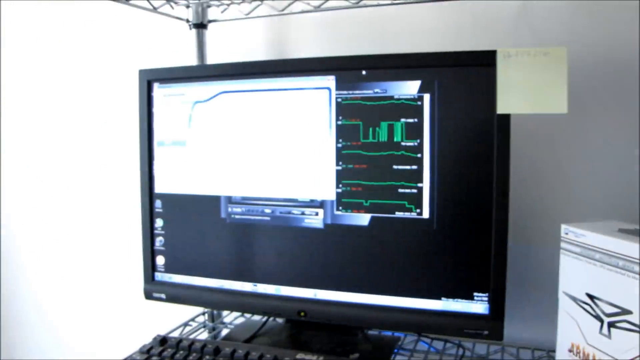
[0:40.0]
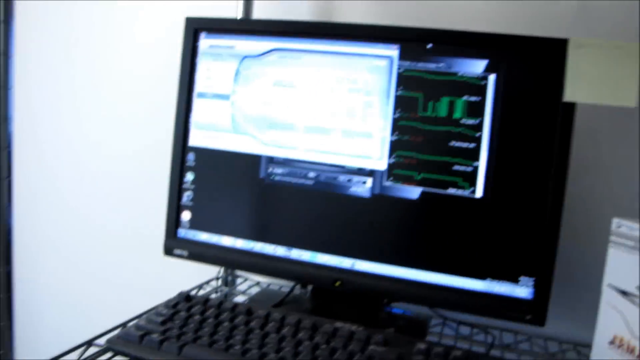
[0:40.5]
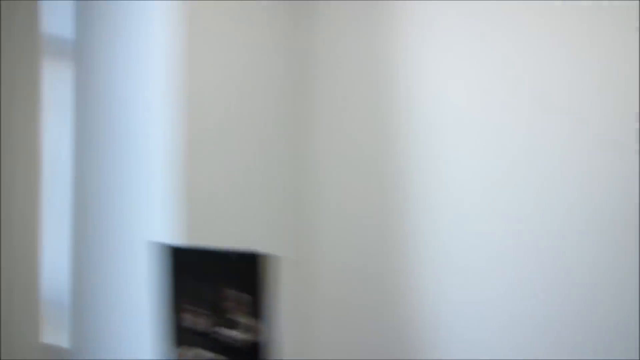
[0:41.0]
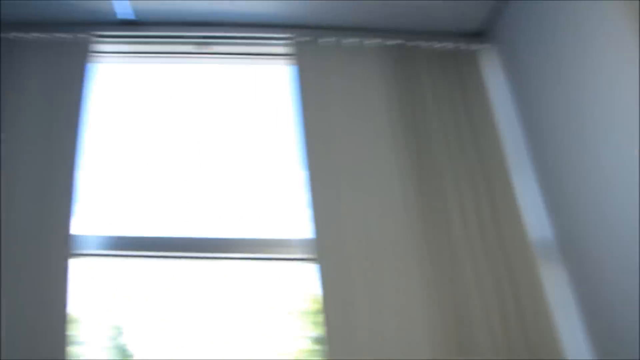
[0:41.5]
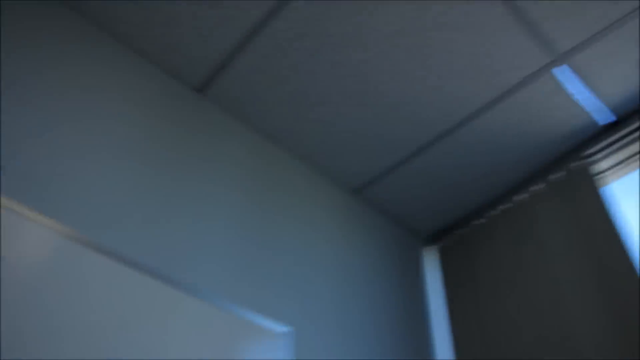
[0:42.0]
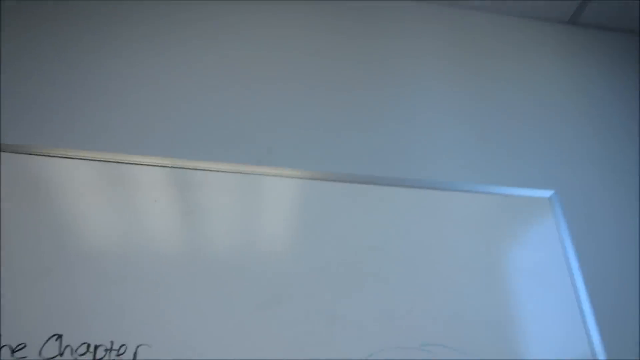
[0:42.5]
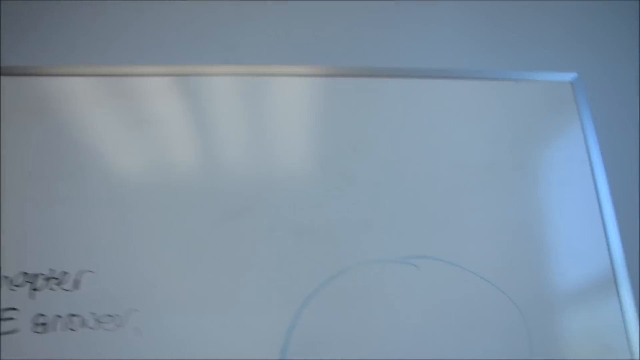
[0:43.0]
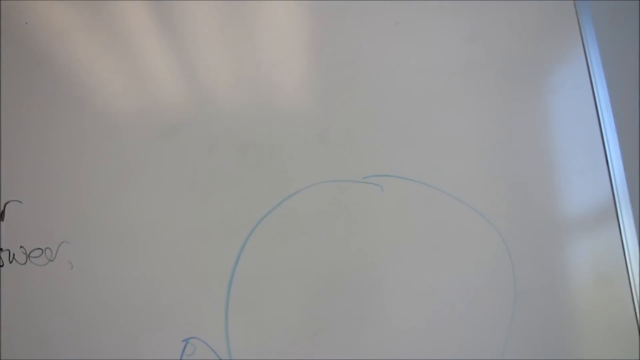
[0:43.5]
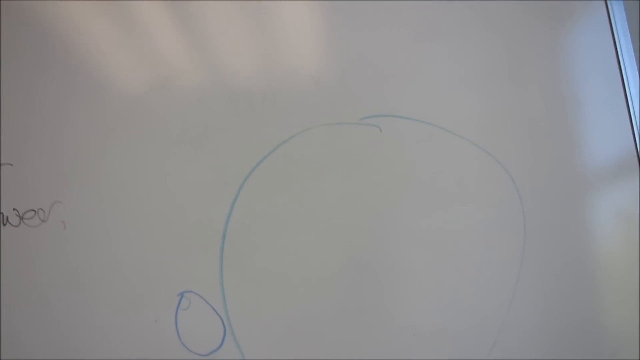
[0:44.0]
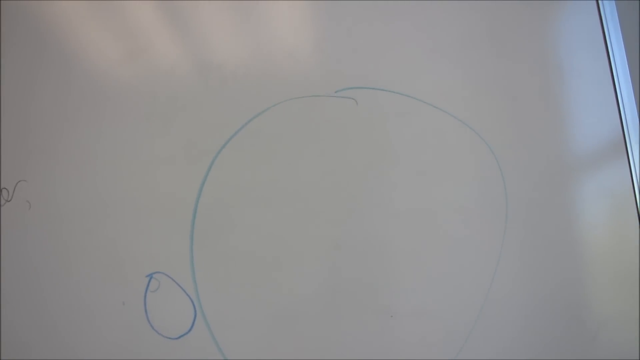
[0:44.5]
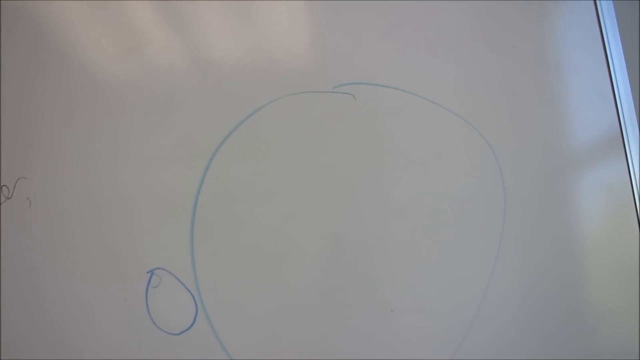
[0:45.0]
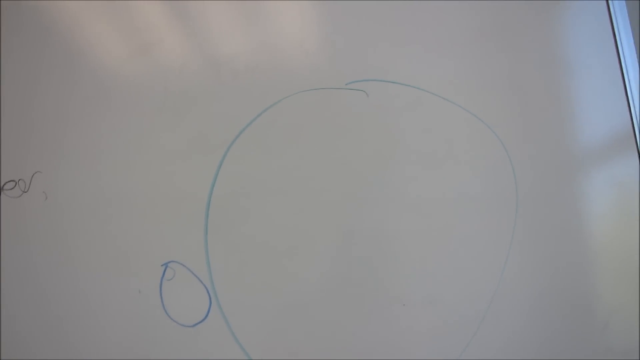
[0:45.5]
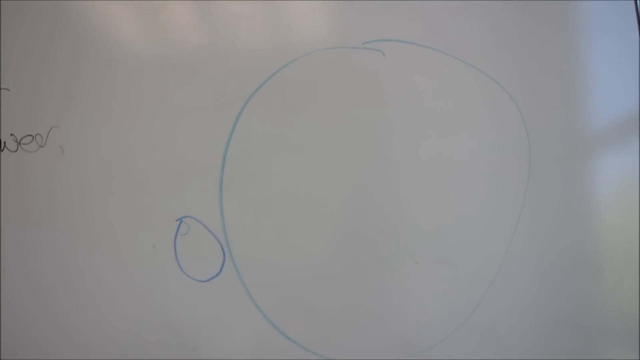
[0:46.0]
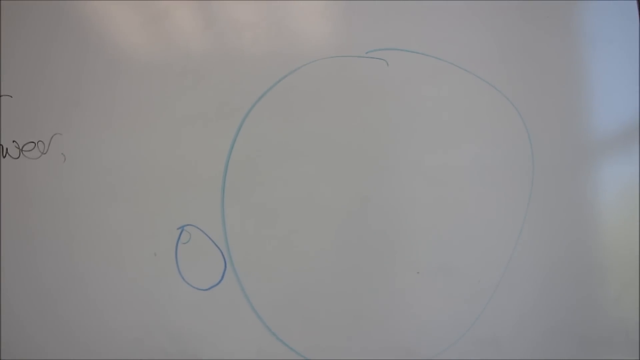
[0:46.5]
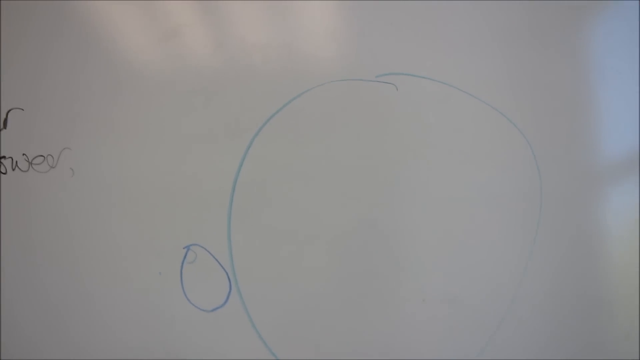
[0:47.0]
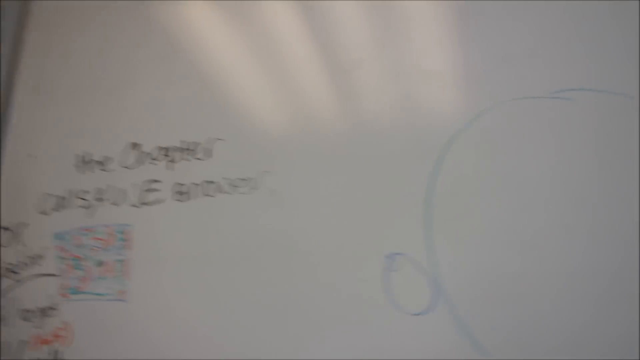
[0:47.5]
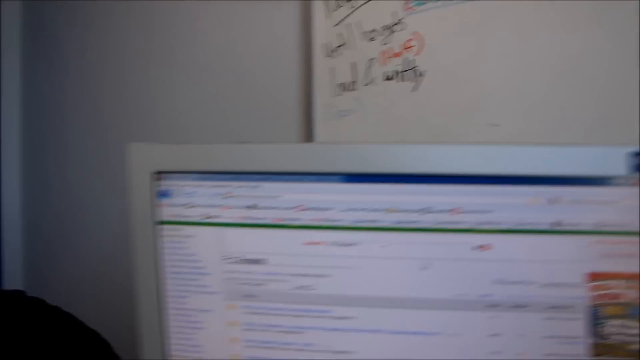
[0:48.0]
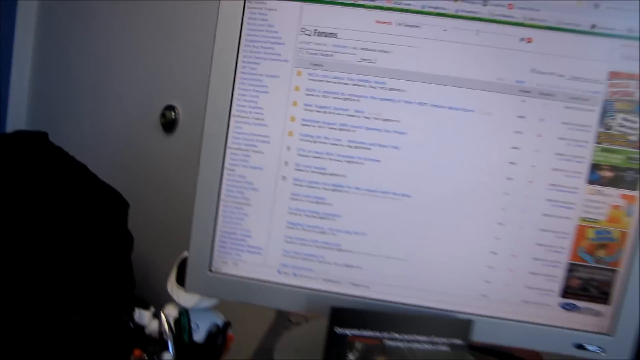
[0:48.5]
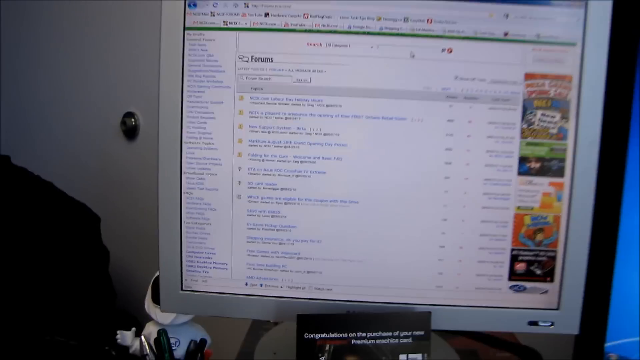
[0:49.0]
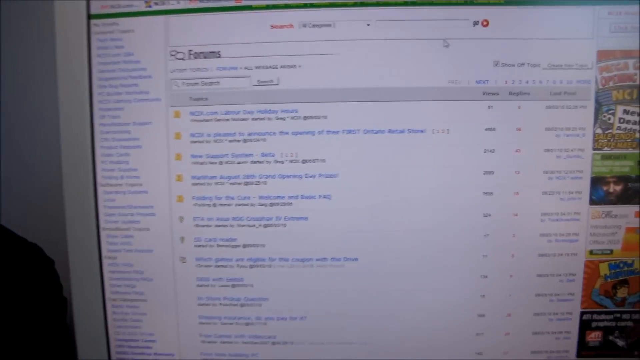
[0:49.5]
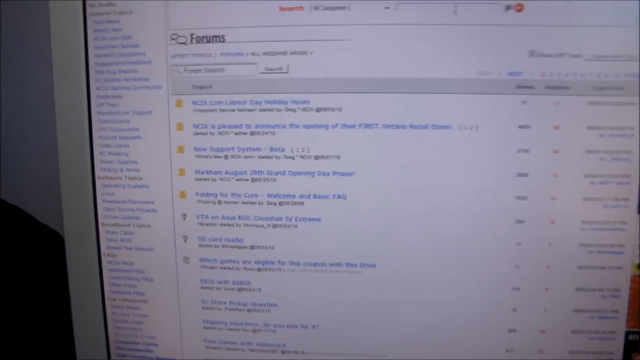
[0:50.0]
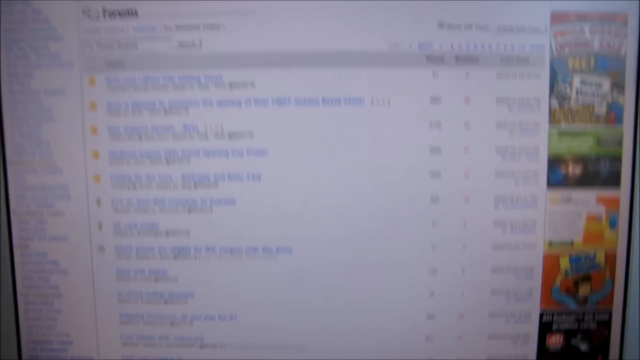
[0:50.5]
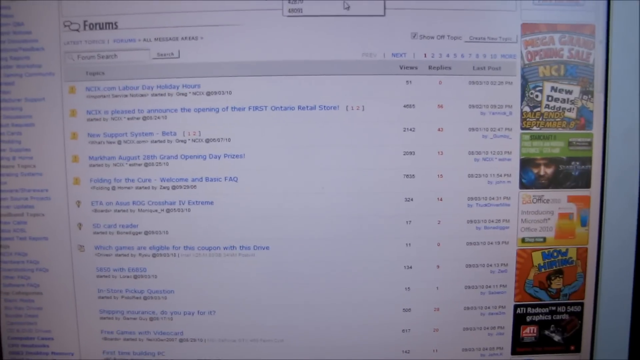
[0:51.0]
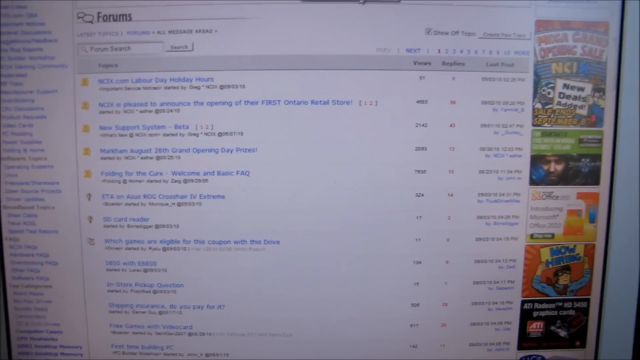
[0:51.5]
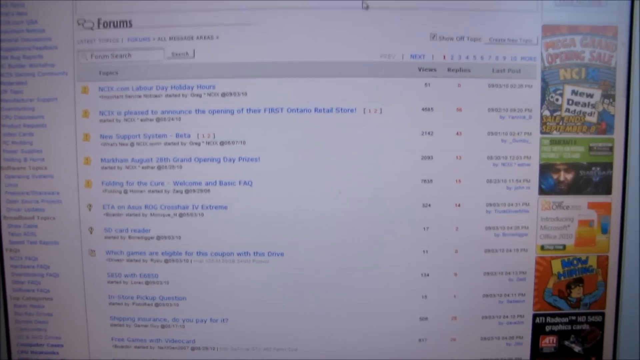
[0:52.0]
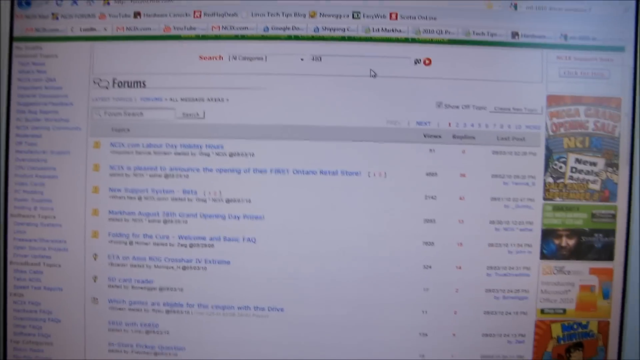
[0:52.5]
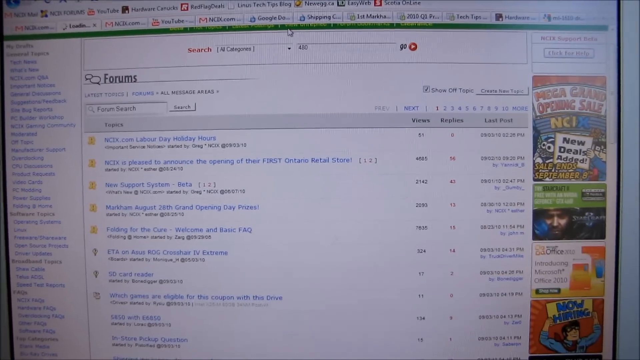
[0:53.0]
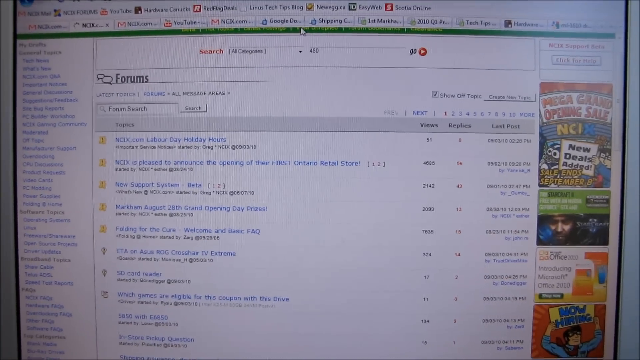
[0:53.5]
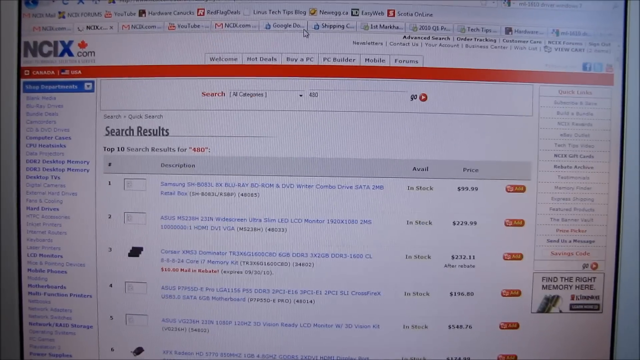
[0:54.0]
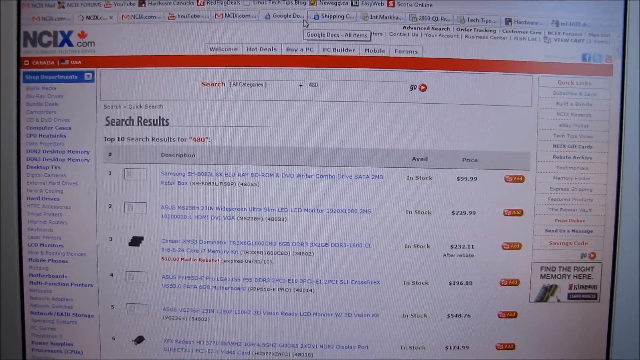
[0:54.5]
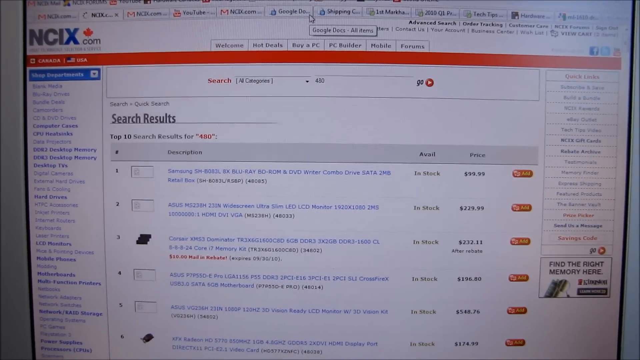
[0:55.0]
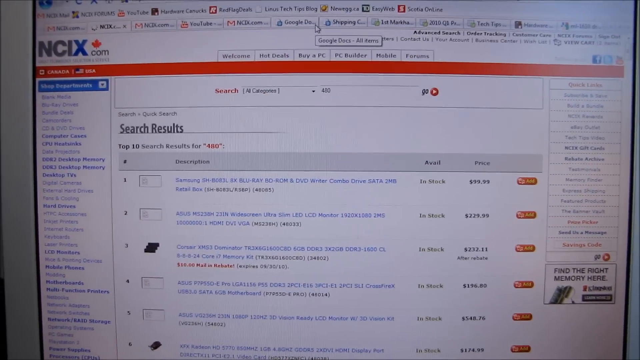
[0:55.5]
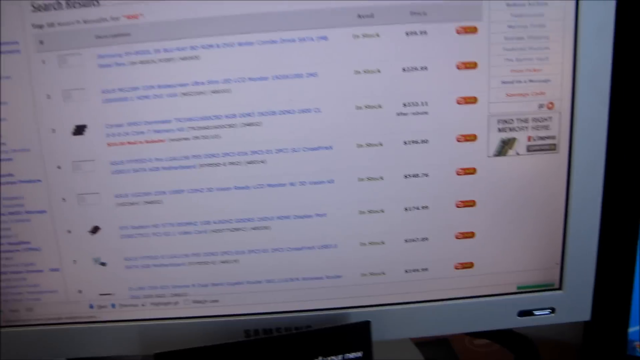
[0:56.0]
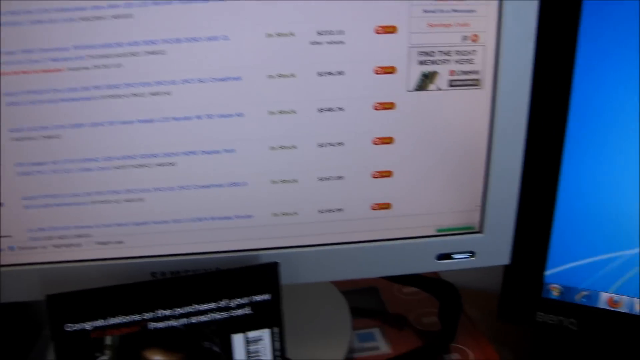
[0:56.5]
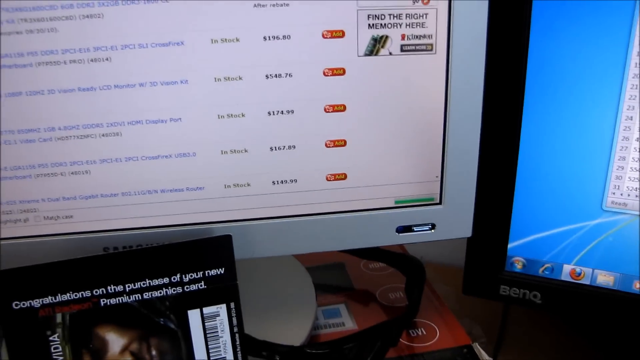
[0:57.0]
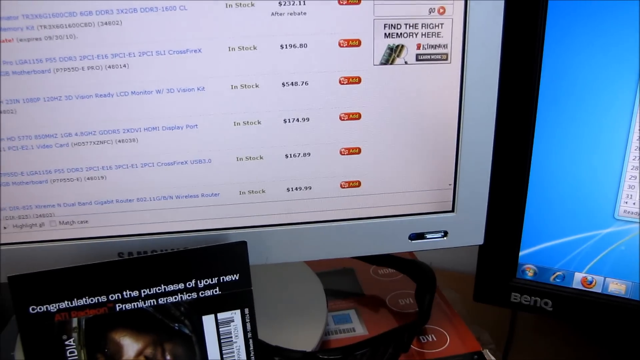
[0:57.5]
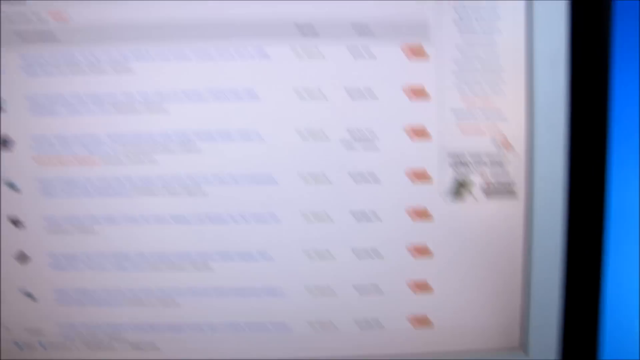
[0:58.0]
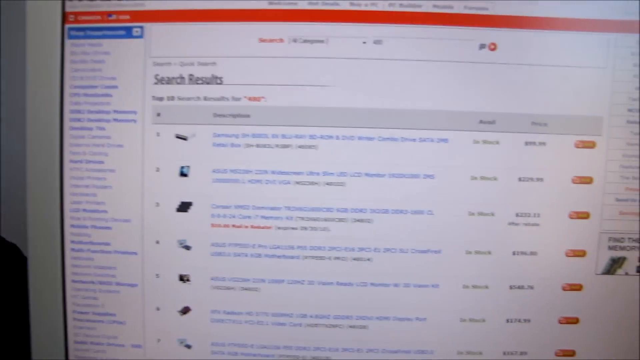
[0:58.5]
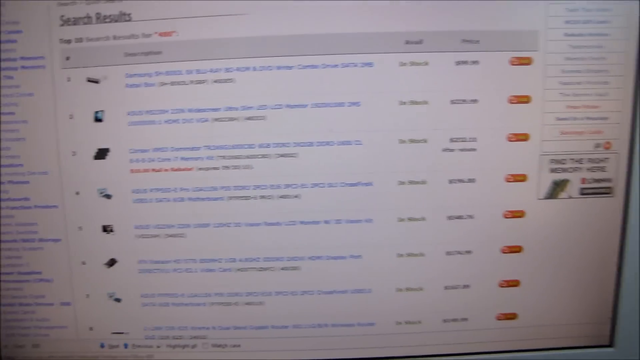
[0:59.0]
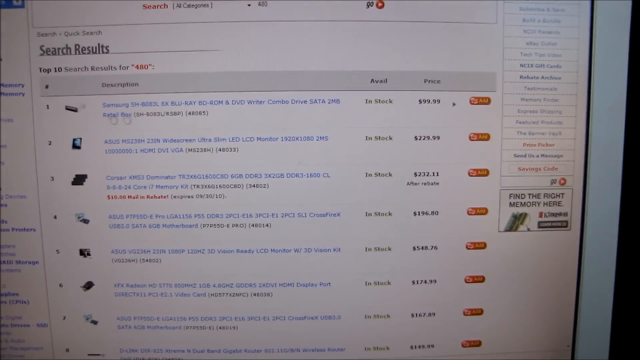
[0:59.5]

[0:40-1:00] The computer screen on the metal shelf is shown briefly, then the person walks away from it and turns around, walking toward what was behind them. The camera passes a window and then reaches a dry erase board. Not much is written on the board: there is a little writing off to the side and some sort of circle. The camera then moves down from the board to show another computer, this time on an actual desk, and zooms in on search results on its screen. It says "NCIX.com", and various search results are listed, though none of them can be read.